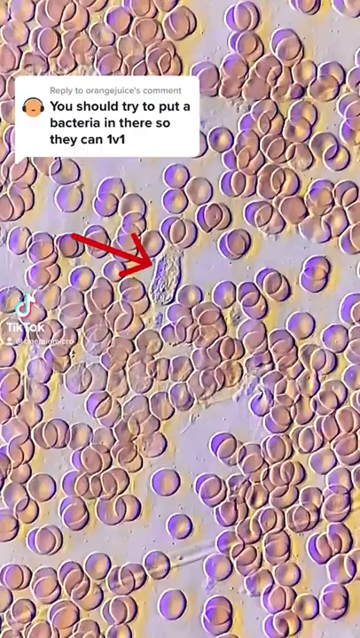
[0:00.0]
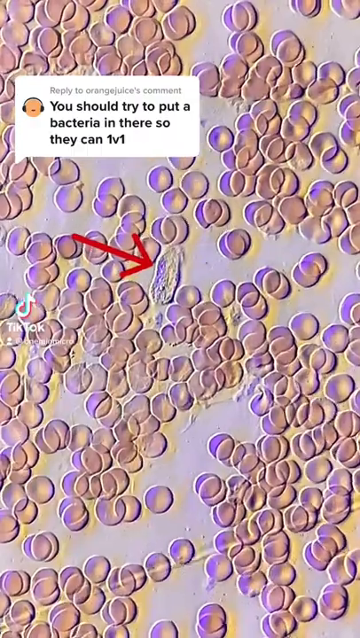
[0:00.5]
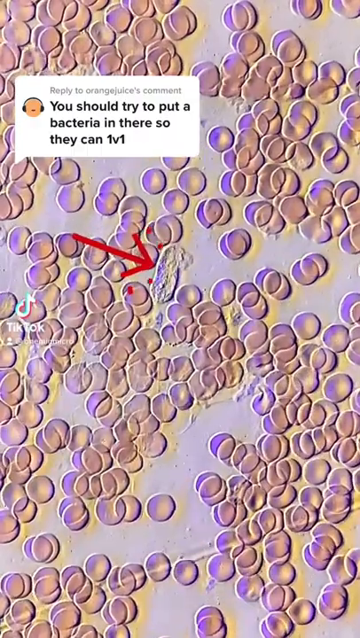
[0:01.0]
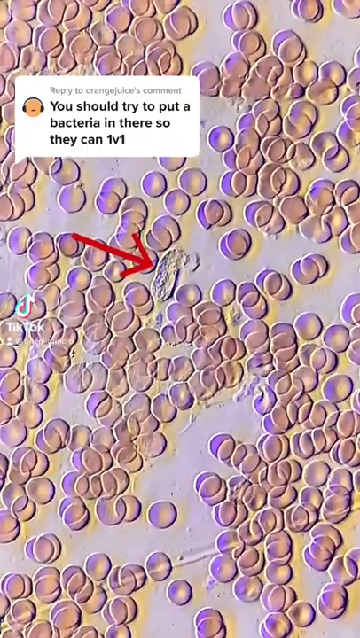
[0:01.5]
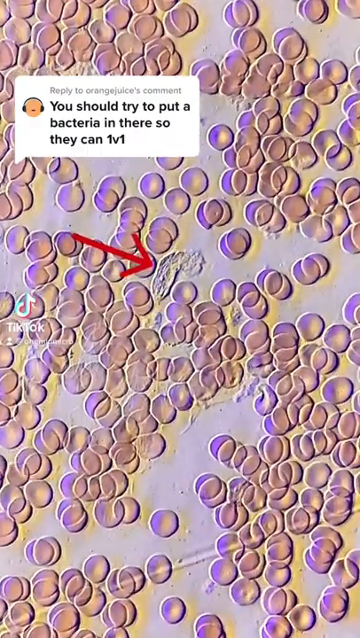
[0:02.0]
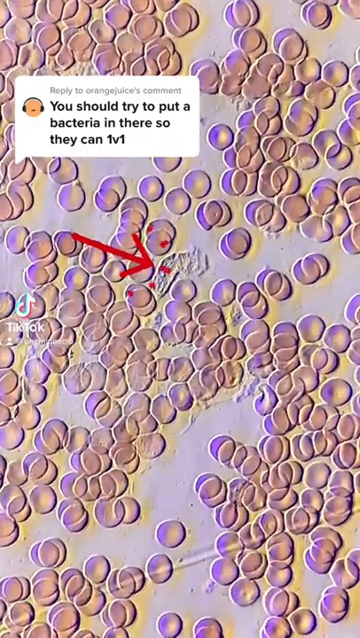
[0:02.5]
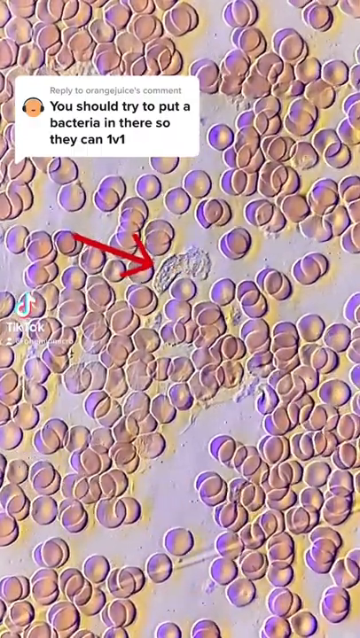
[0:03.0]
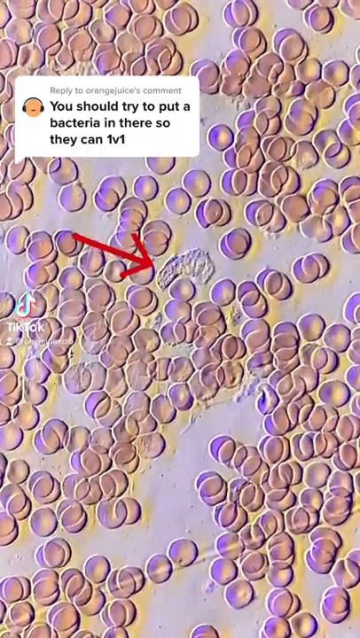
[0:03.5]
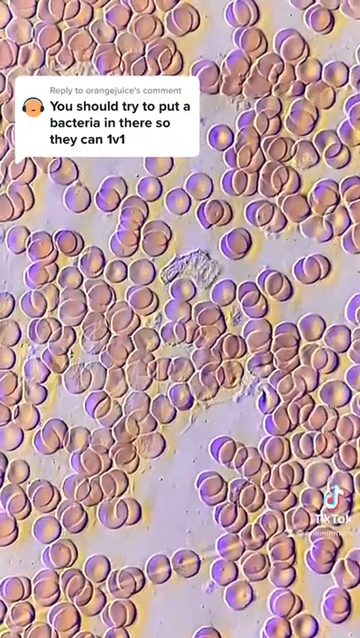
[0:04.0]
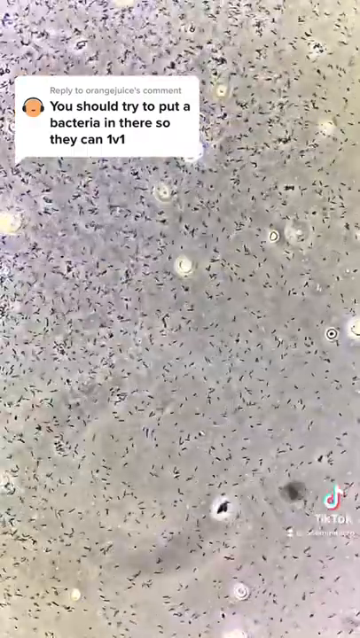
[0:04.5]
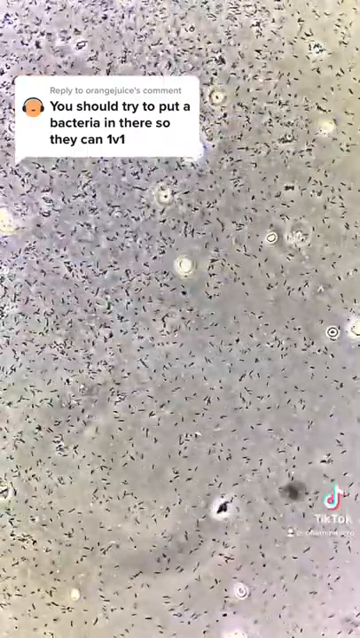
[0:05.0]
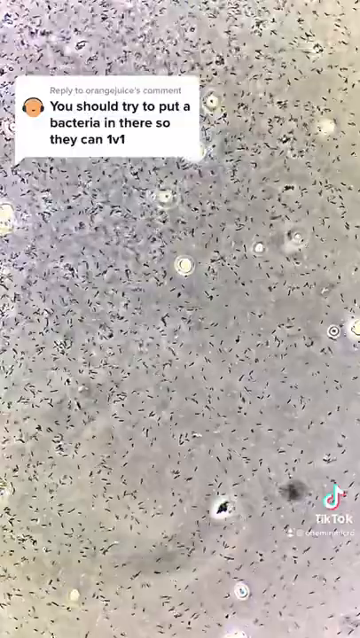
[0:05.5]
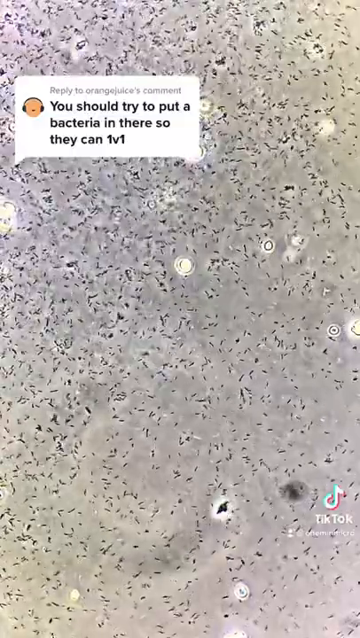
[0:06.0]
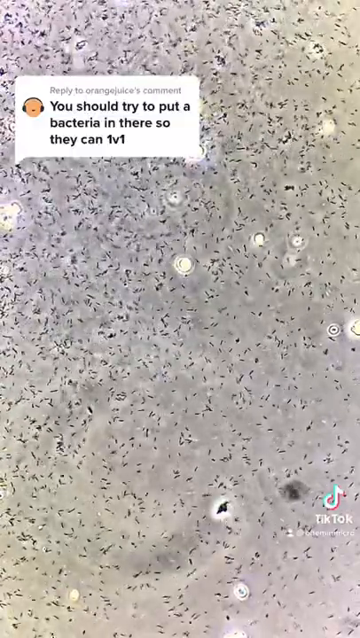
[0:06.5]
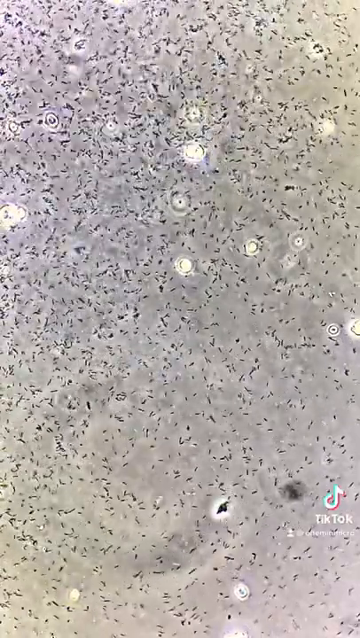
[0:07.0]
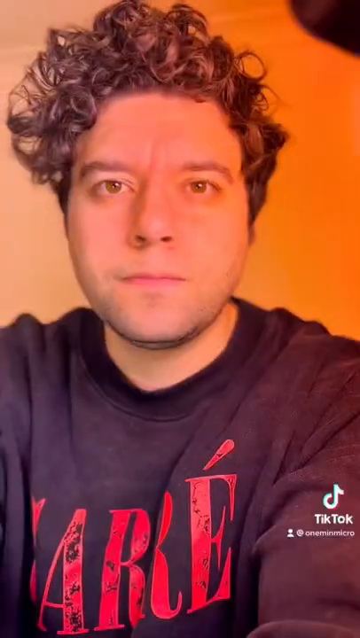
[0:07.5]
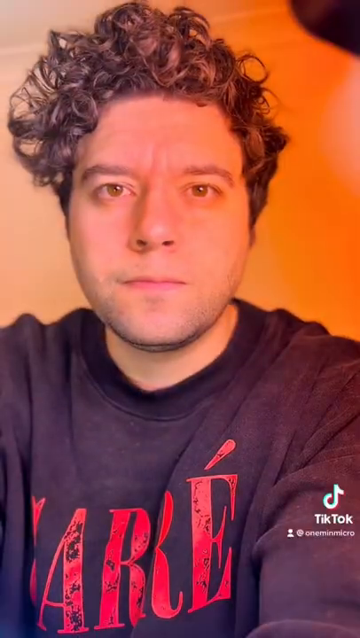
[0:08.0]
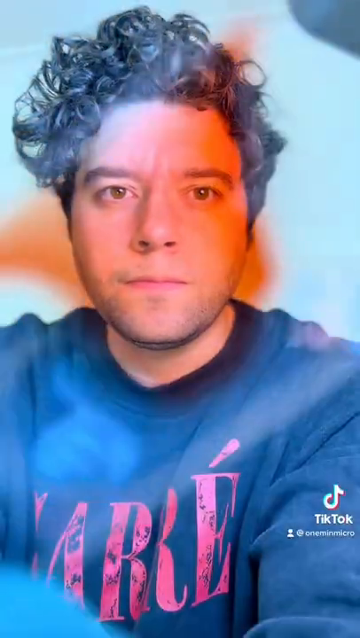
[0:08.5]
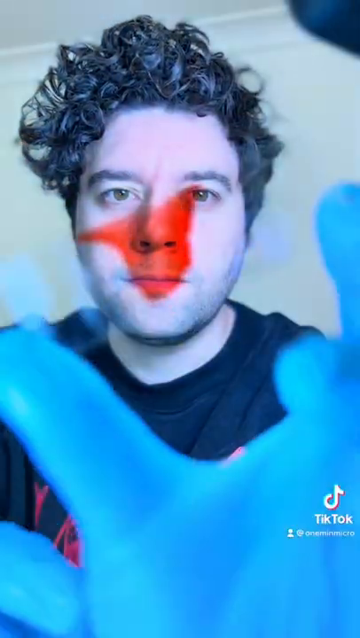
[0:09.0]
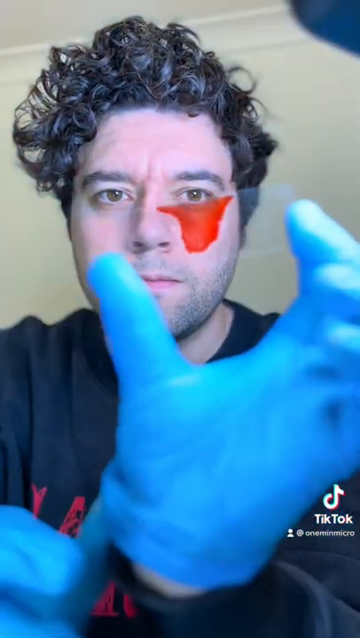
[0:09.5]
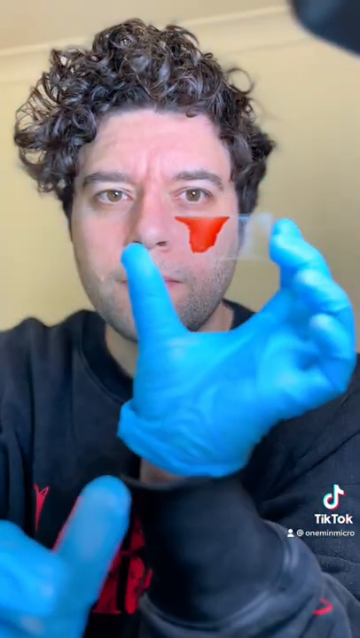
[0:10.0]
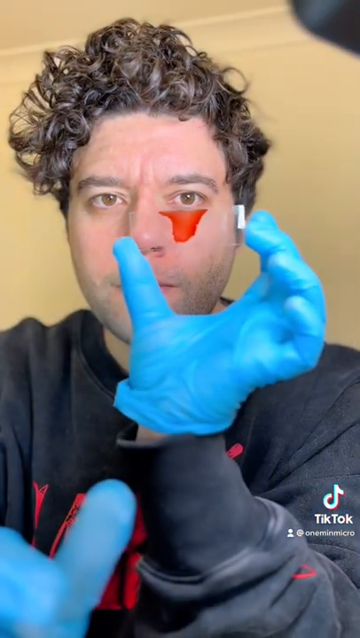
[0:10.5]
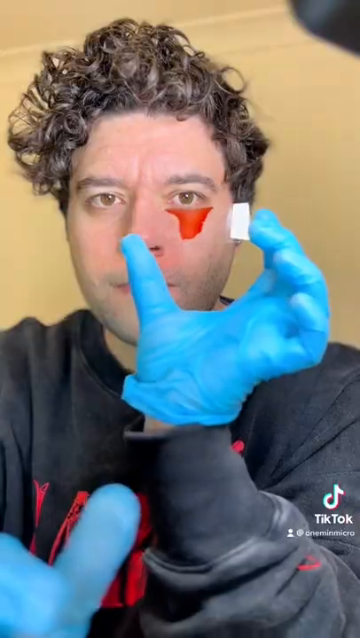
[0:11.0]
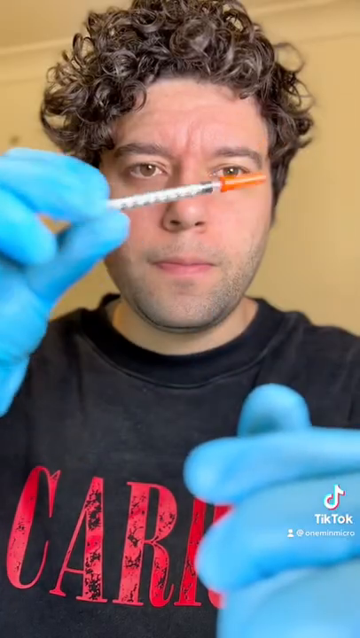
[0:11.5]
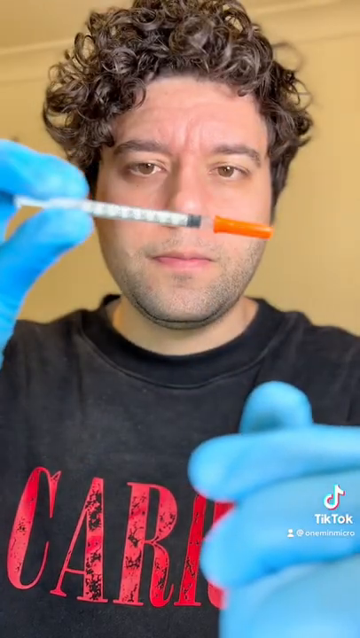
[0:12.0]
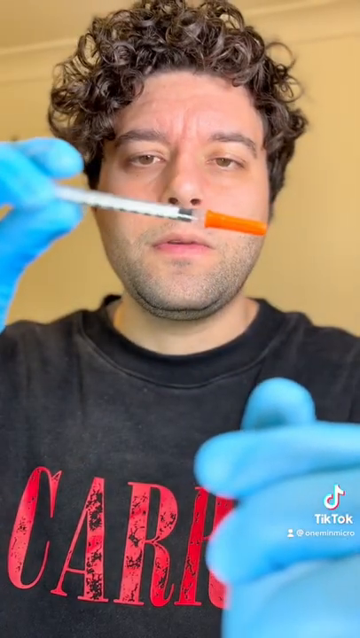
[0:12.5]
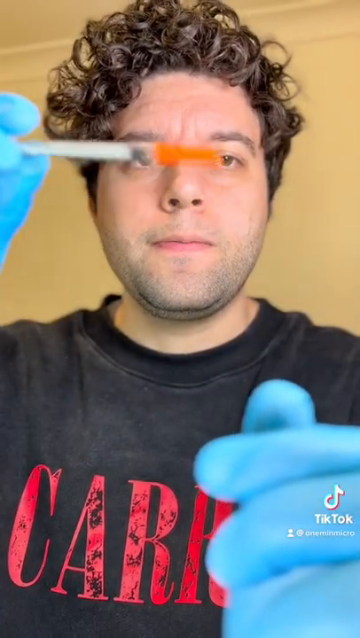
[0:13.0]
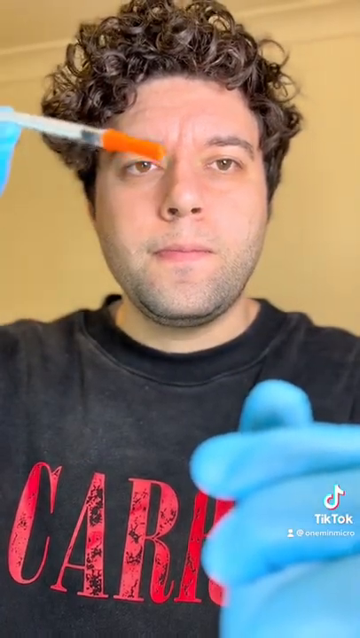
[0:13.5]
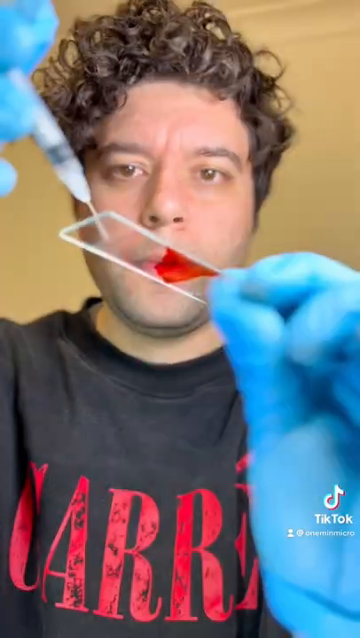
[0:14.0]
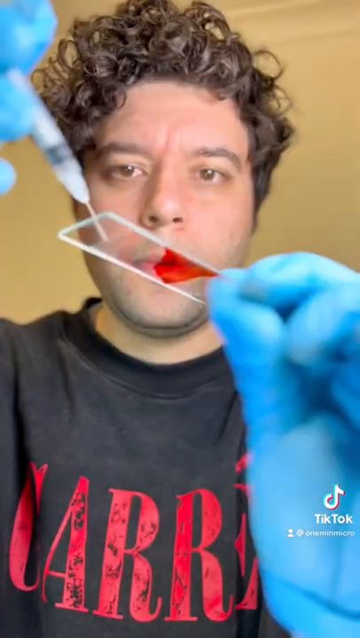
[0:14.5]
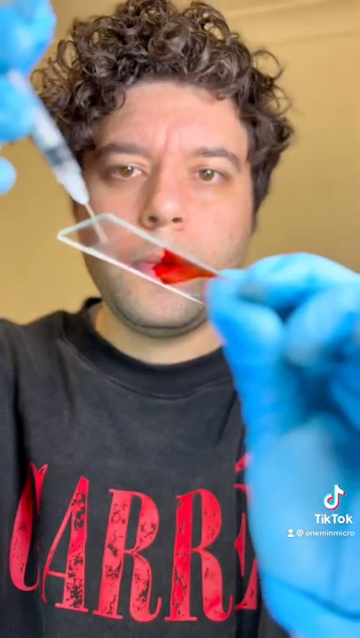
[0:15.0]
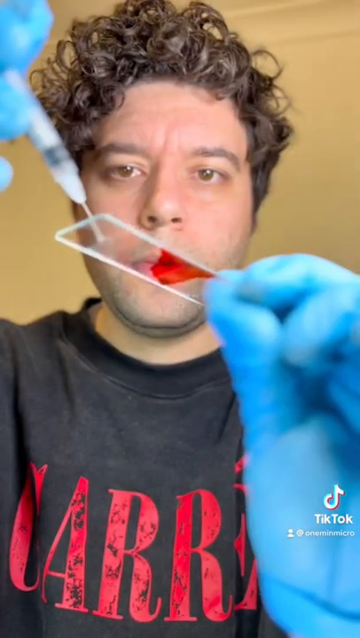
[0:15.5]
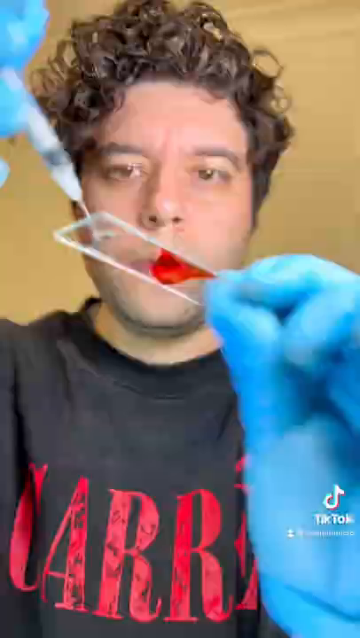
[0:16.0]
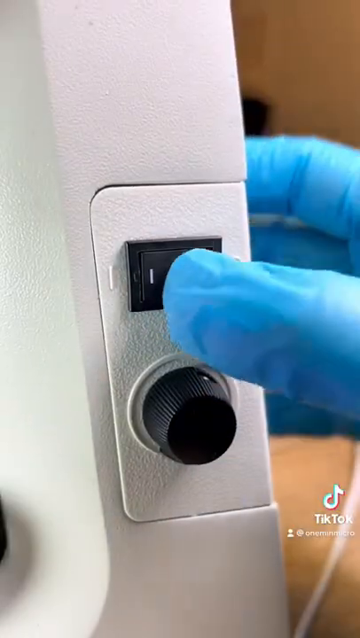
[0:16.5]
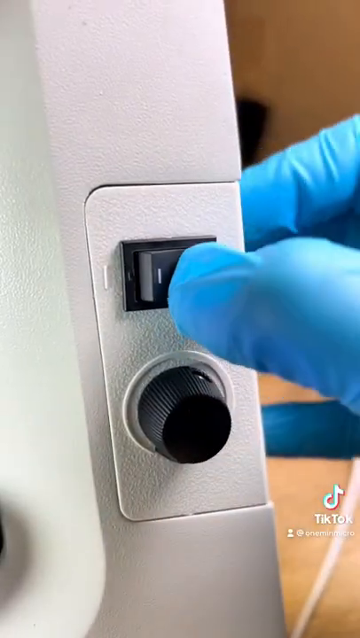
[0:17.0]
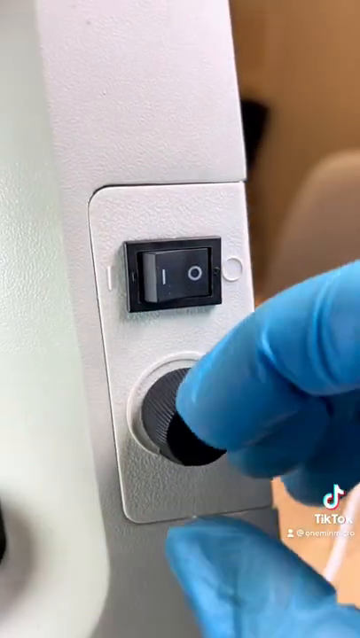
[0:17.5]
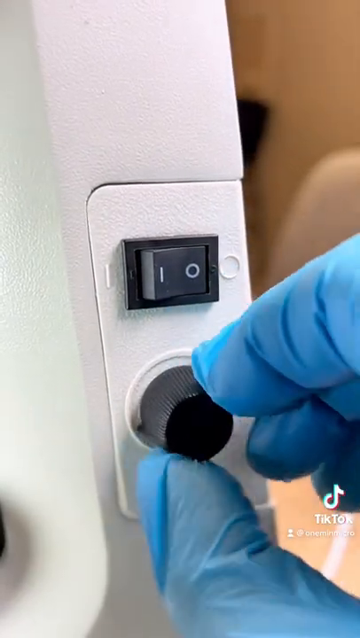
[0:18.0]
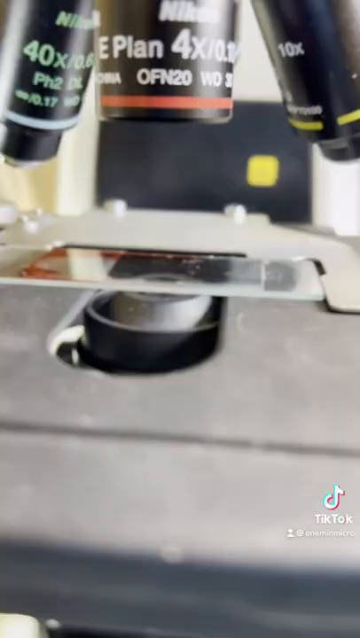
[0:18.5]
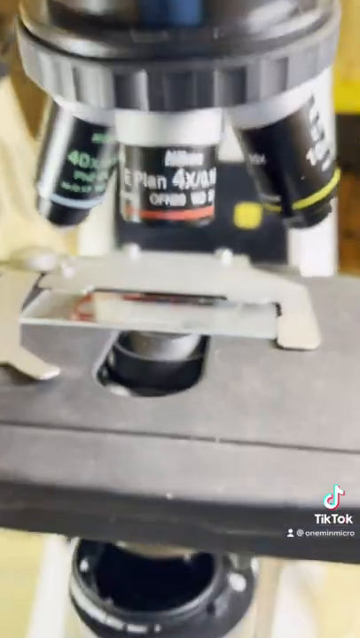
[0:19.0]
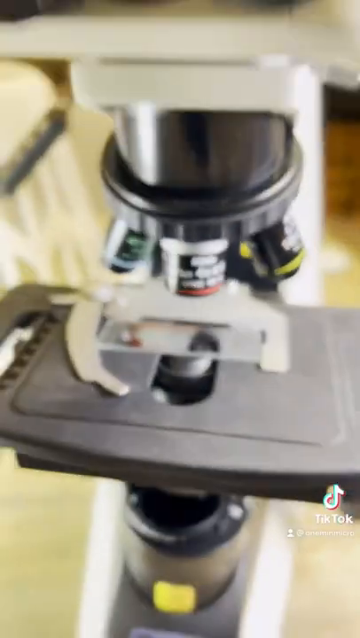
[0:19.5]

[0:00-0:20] The video cuts to what looks like a group of cells, then to another image of cells. A man wearing blue gloves holds some kind of glass that he has put under a microscope, then slowly pulls it up, revealing some kind of red stain on the glass. He picks up what looks like an injection needle and seems to put some kind of liquid on the glass. The video cuts to him adjusting the knobs on the microscope with his blue gloves on, and he clicks the power button. The lens of the microscope is shown, then the video cuts to what appears to be him looking through the microscope at the cells inside the glass. Two different images are shown, one in color and the other in black and white. Afterward, the man pulls out the glass.